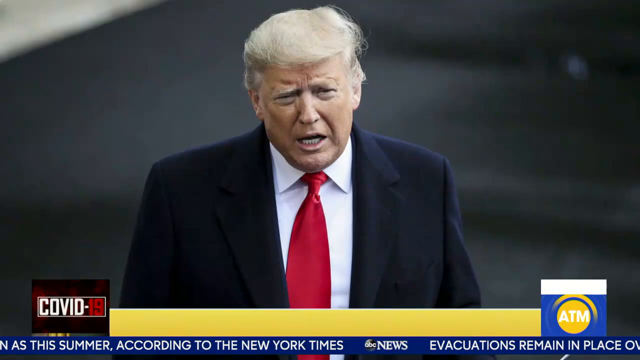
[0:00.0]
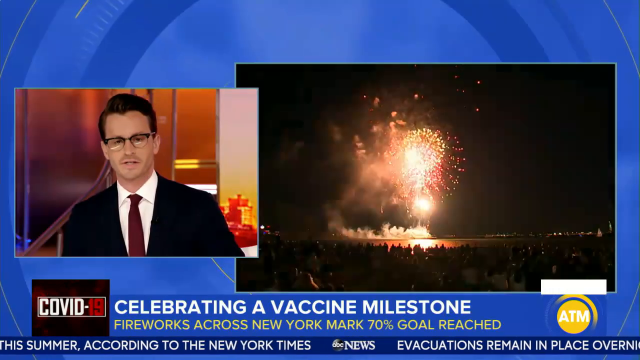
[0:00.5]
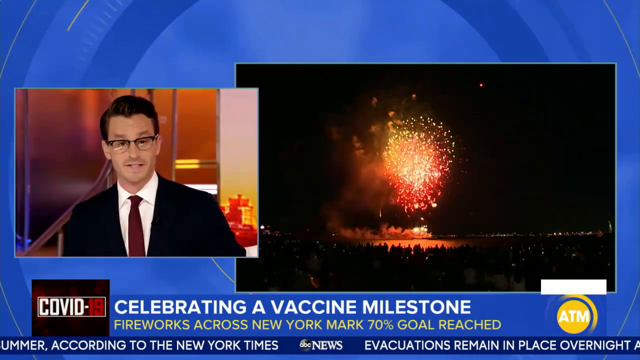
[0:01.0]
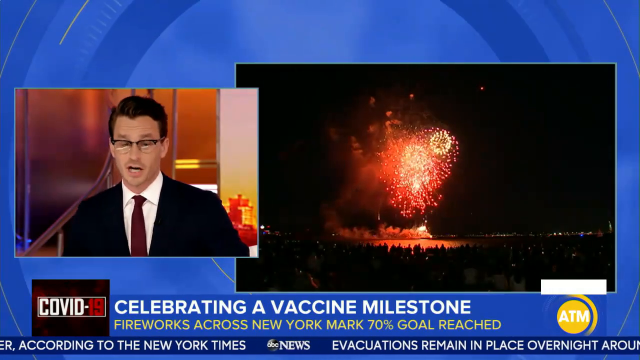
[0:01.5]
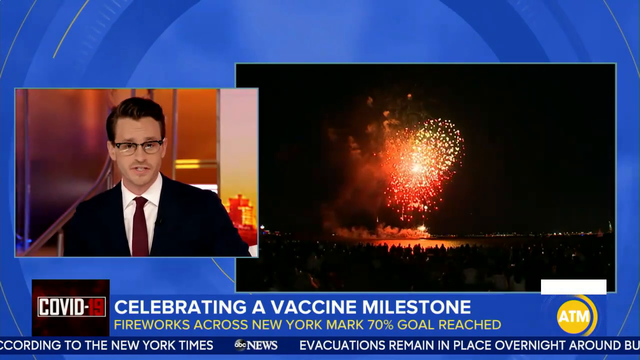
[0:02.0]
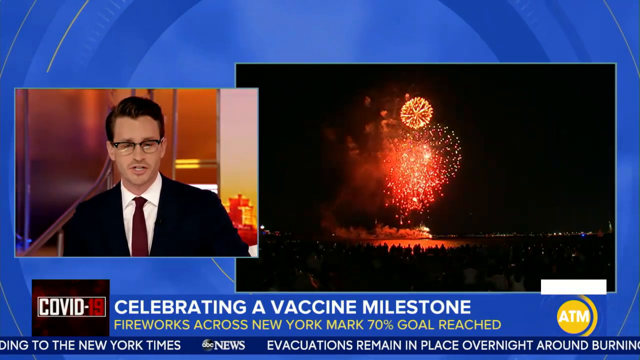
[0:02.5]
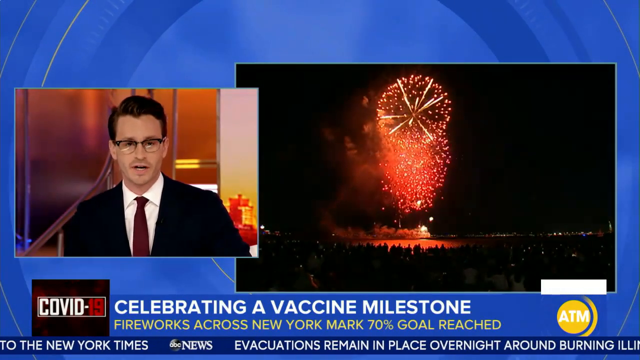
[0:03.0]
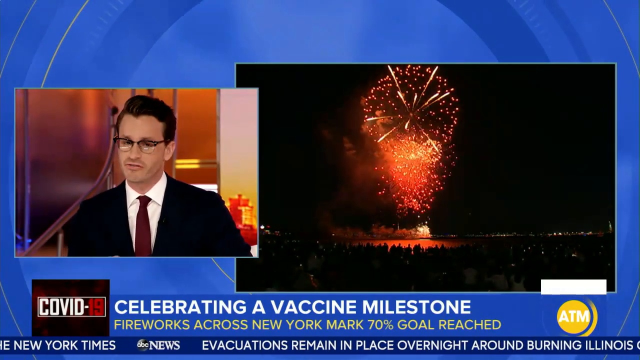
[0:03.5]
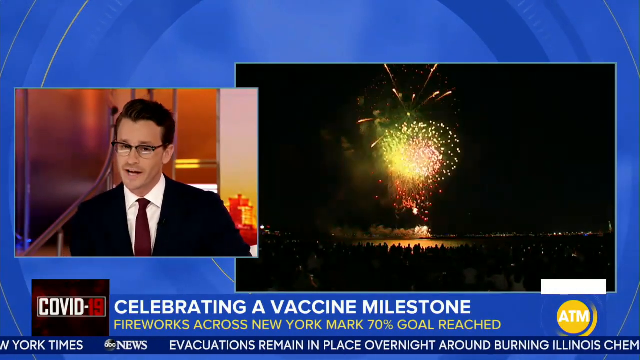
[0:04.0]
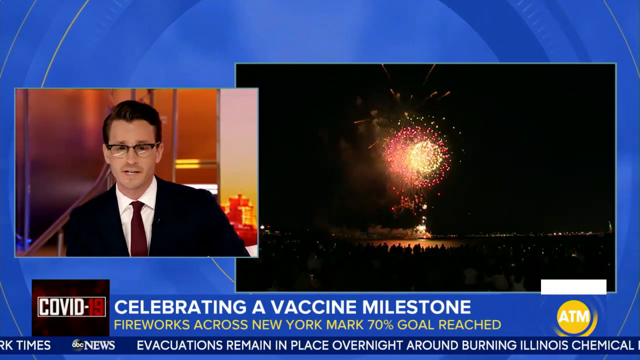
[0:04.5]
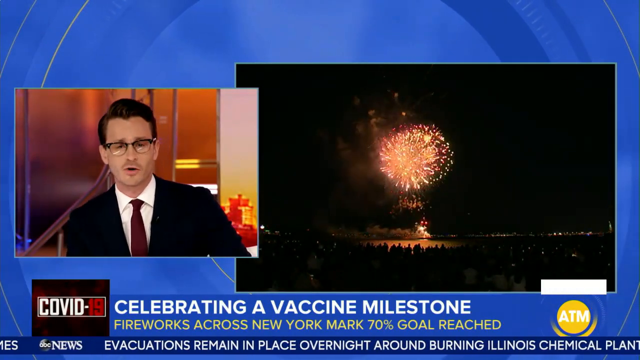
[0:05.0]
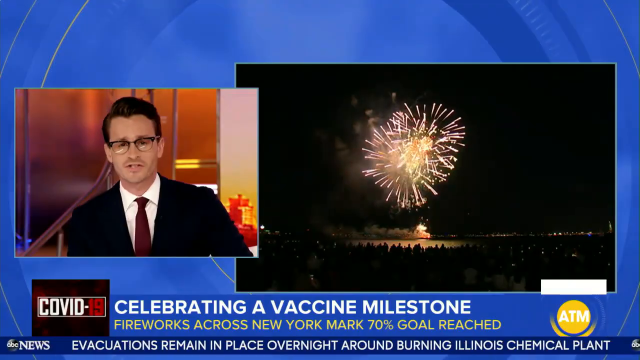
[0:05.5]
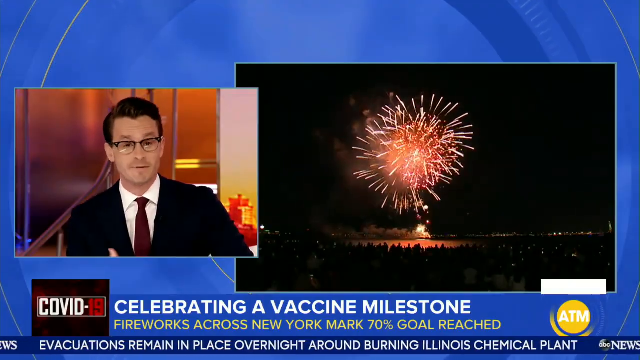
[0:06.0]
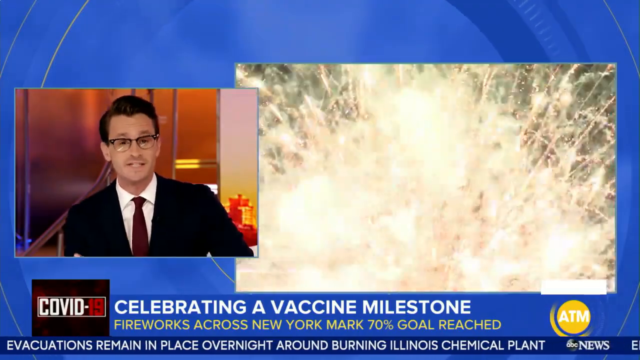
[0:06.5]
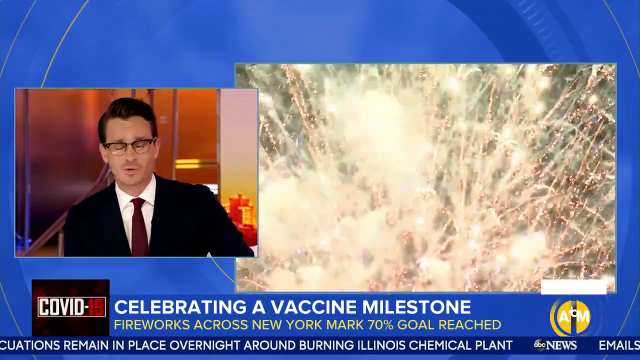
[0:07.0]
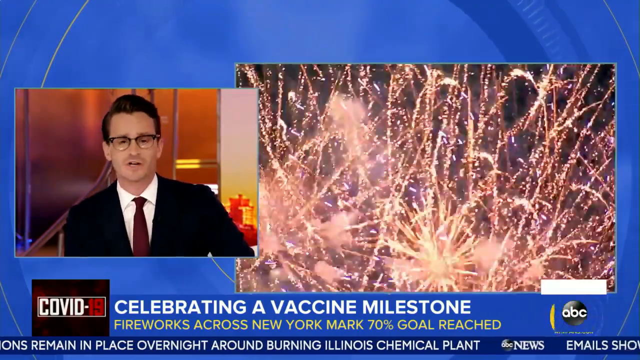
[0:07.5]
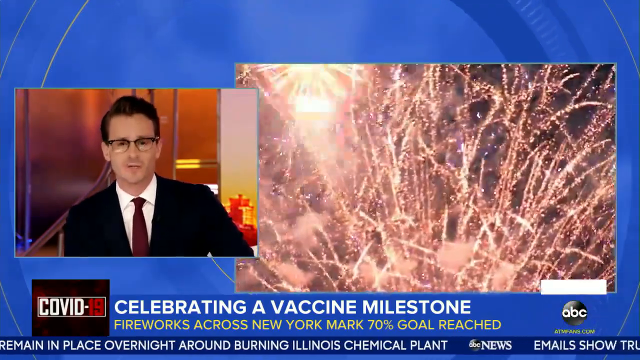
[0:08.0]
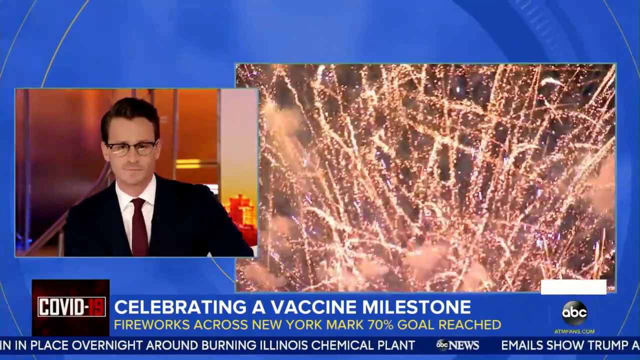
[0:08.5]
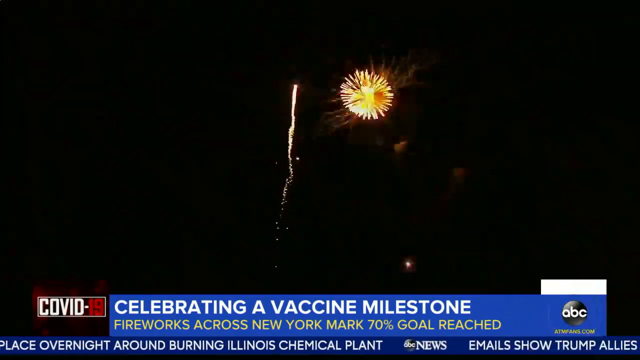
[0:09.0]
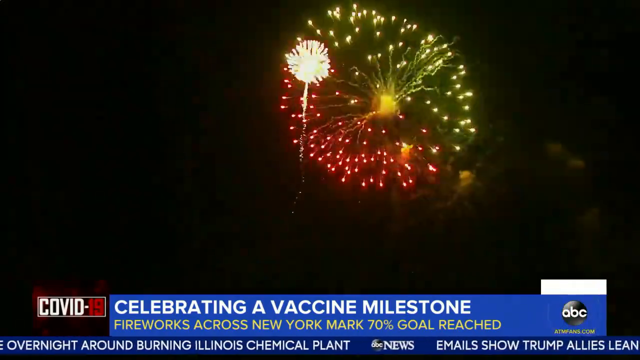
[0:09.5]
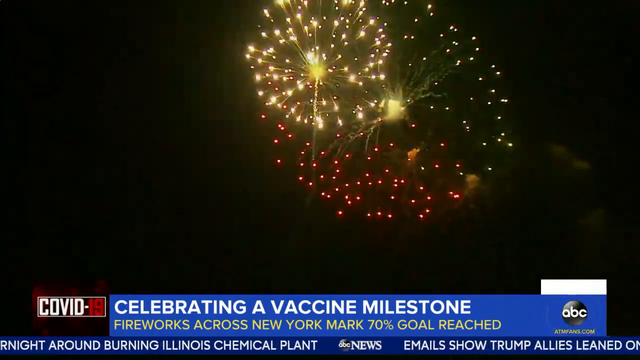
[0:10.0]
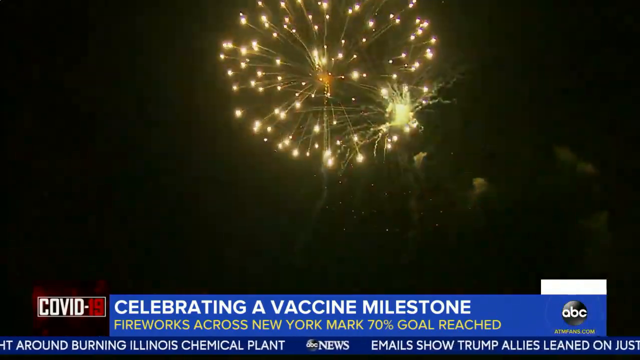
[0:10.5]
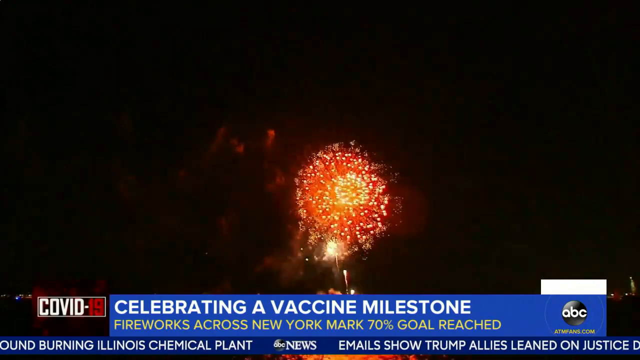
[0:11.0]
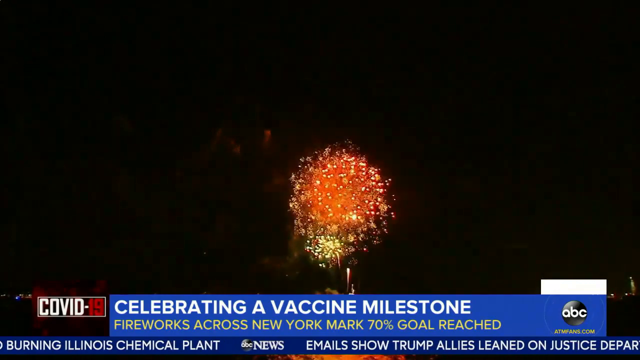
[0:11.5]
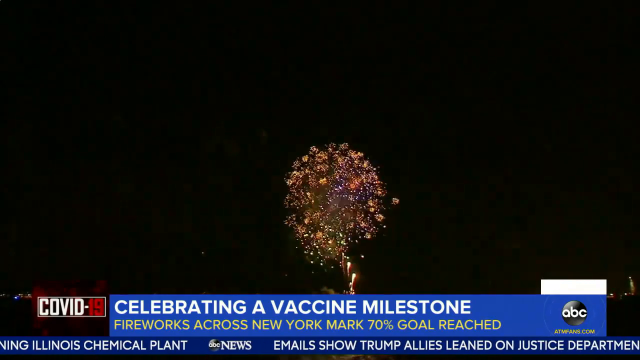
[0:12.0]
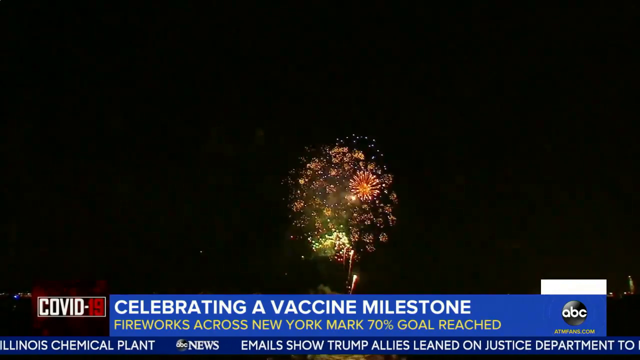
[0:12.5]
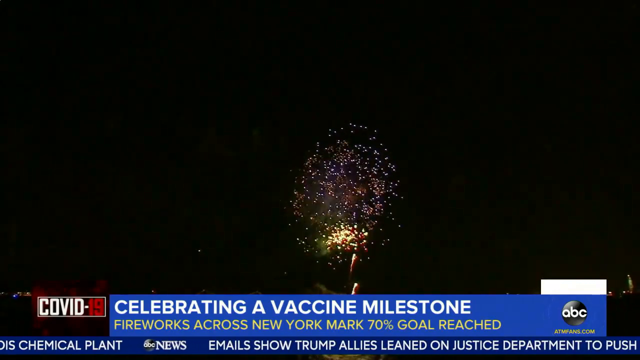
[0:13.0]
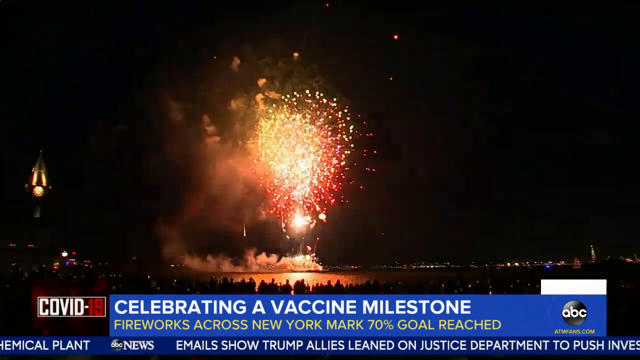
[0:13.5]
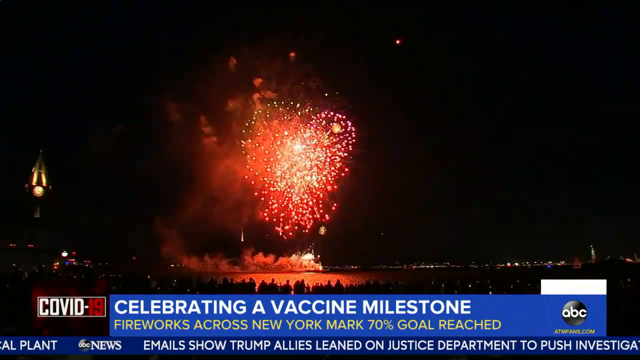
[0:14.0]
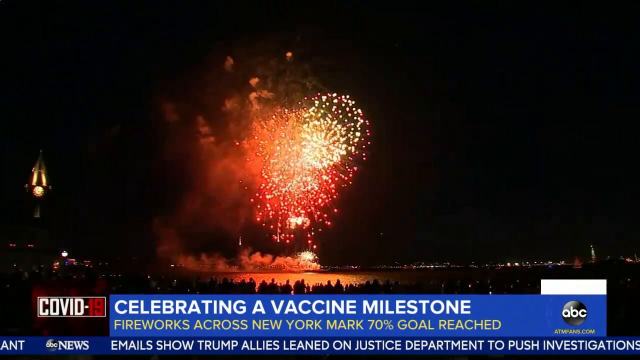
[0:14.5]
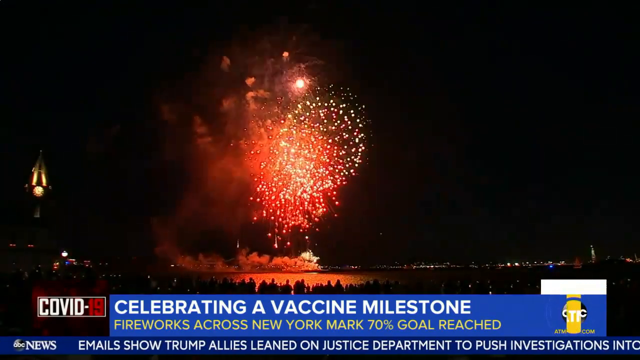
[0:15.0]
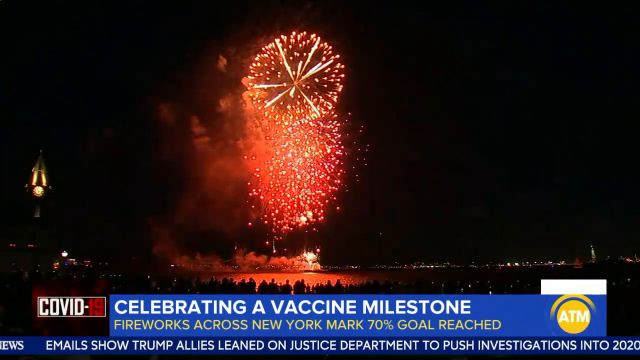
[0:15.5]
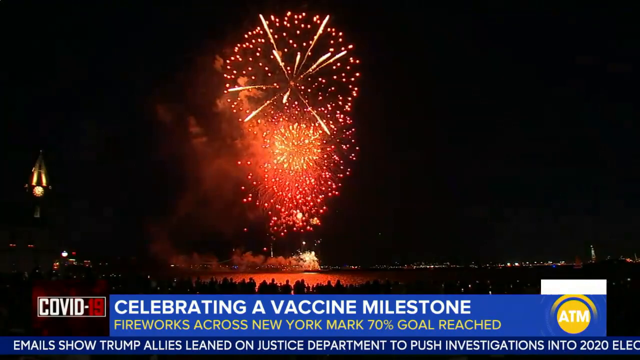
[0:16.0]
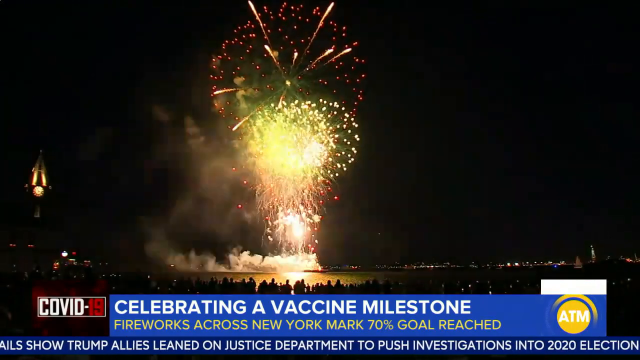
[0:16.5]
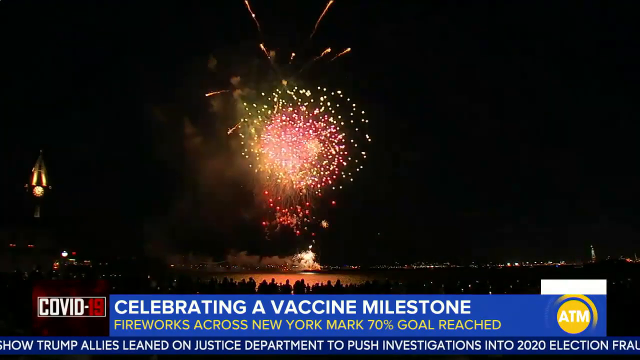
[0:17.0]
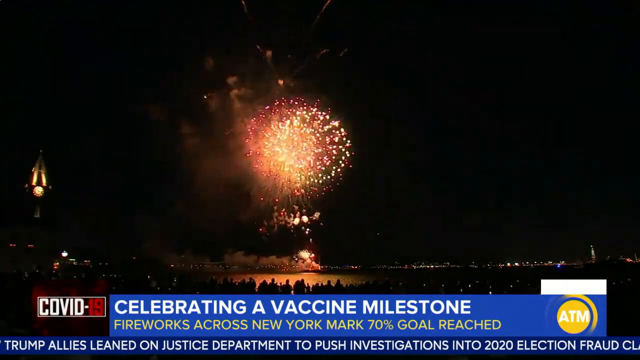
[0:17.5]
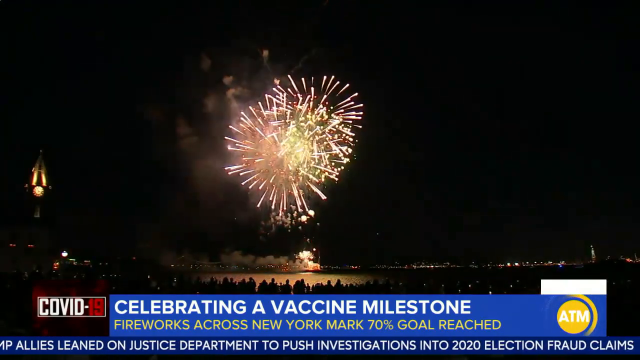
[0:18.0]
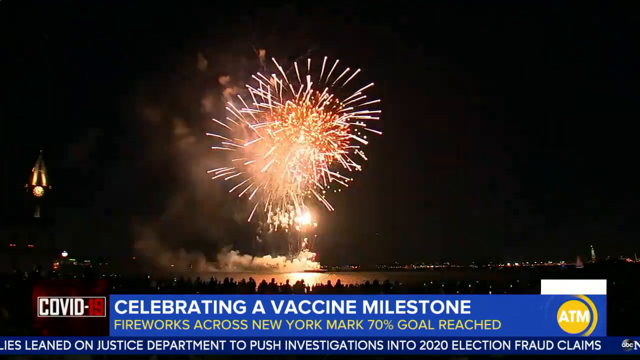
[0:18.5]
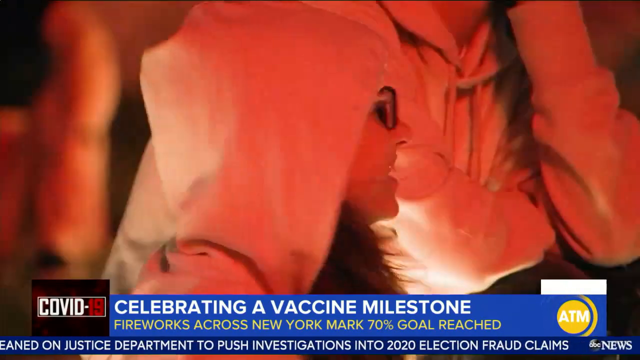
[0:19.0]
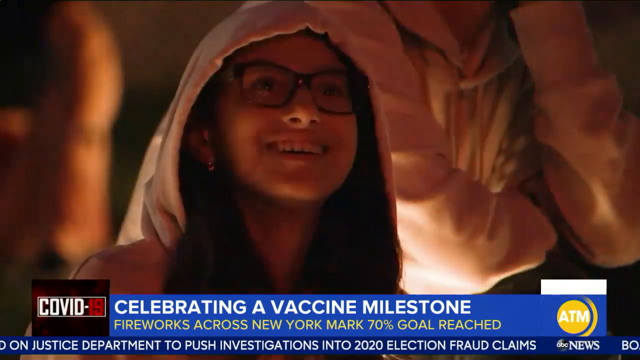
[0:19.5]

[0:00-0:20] A news anchor appears on the left side of the screen, wearing a black coat with a white dress shirt and a tie, while the right side shows an image of fireworks going off at night, exploding in different colors. A close-up shows more red and green fireworks. Text at the bottom of the screen reads "celebrating a vaccine milestone." A different angle shows the fireworks going from pink to green. The video then cuts to a young girl wearing a pink hoodie over her head and glasses with black frames; she has long dark hair. Behind her is another person who also seems to be wearing a pink sweater. As the fireworks go off and are shown from different angles, a huge crowd can be seen surrounding the fireworks in the distance.